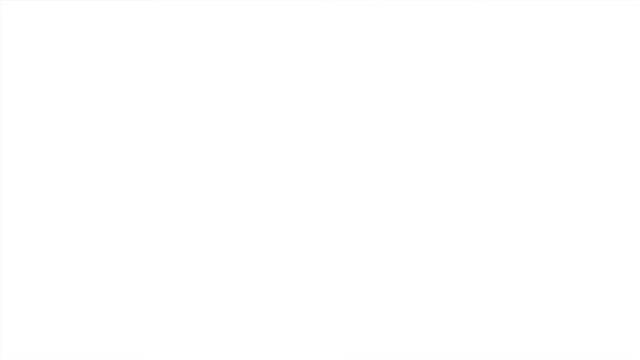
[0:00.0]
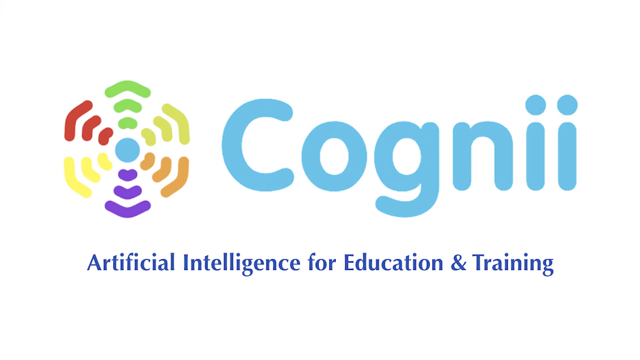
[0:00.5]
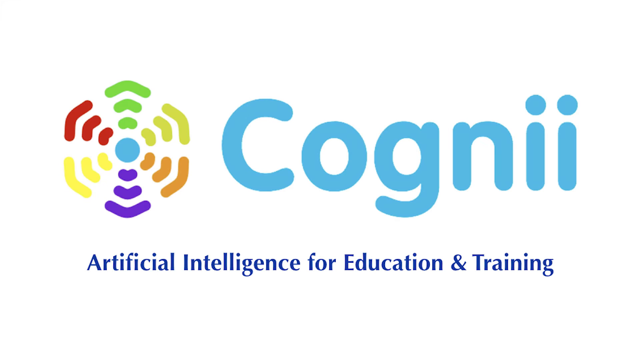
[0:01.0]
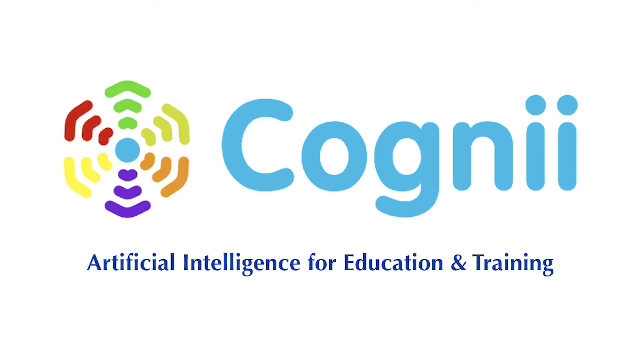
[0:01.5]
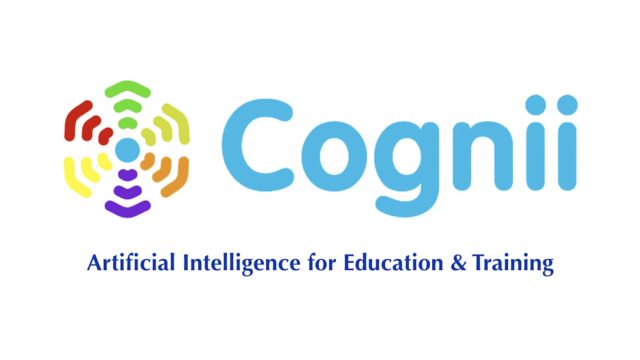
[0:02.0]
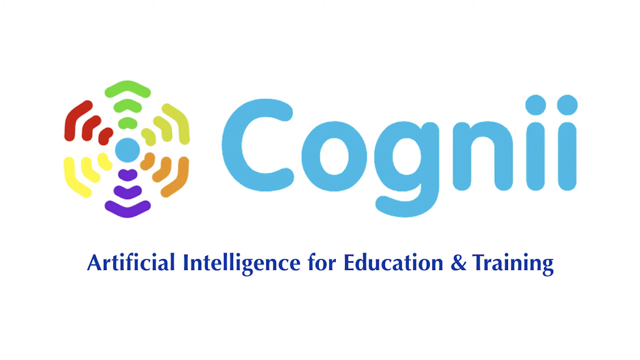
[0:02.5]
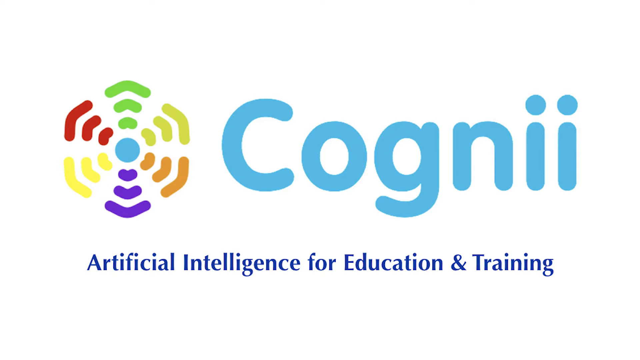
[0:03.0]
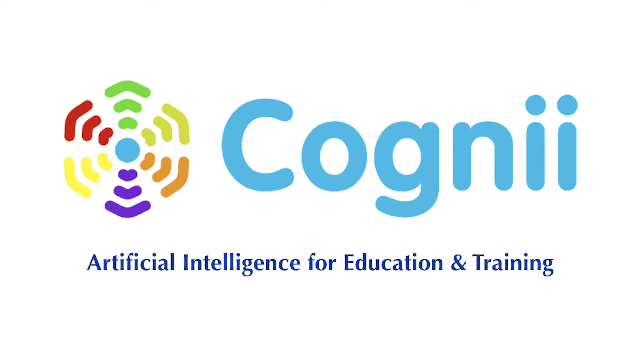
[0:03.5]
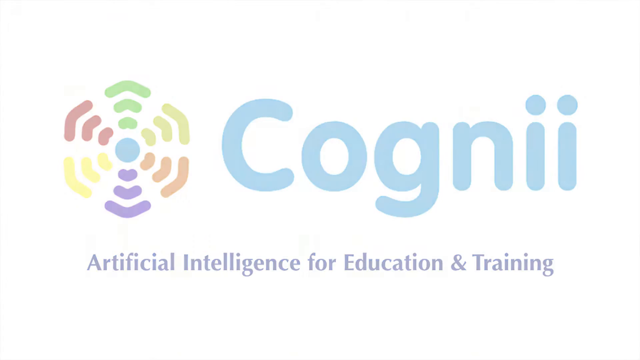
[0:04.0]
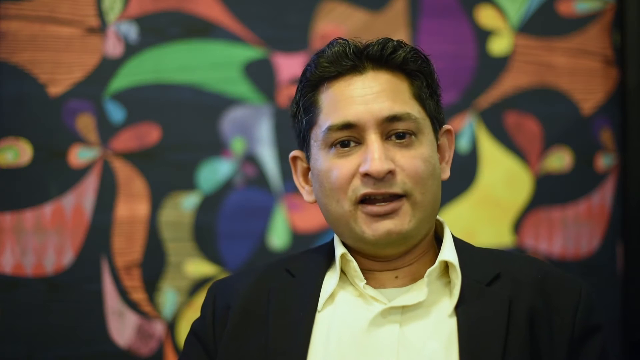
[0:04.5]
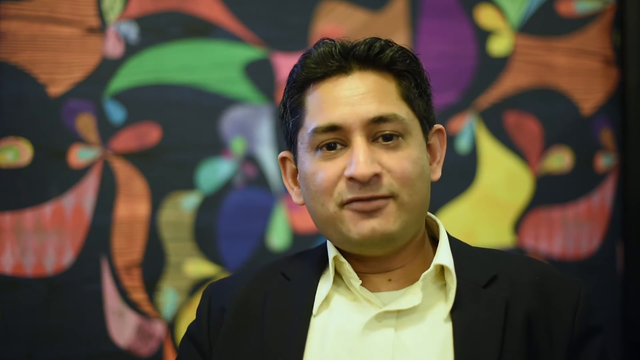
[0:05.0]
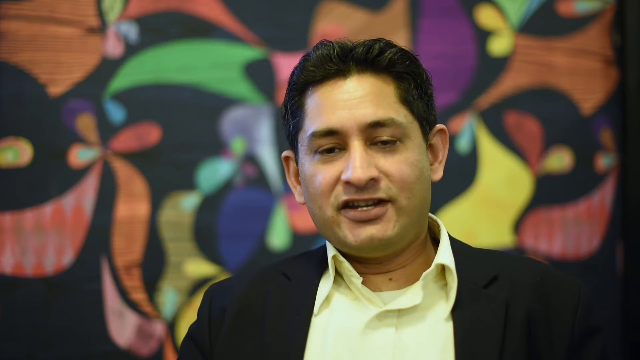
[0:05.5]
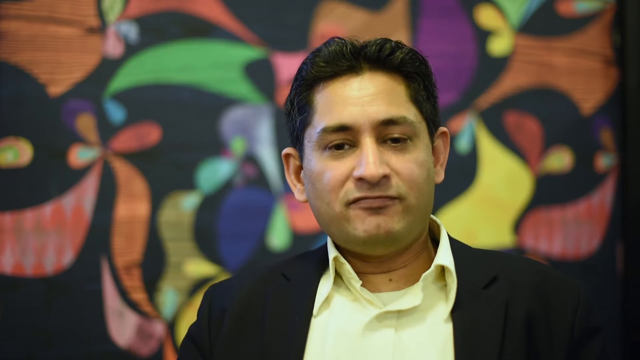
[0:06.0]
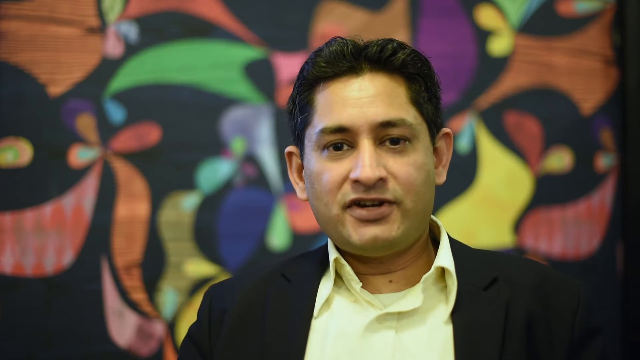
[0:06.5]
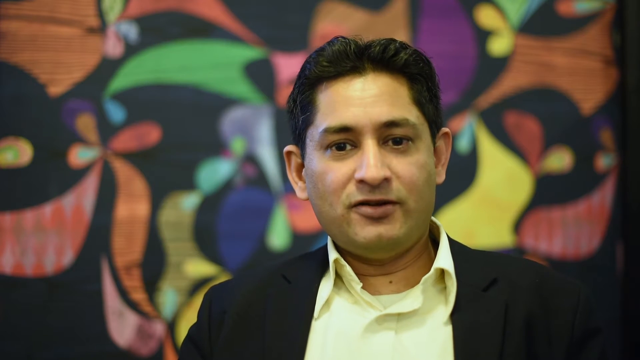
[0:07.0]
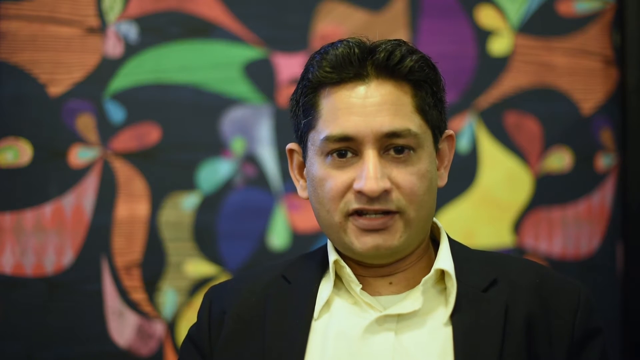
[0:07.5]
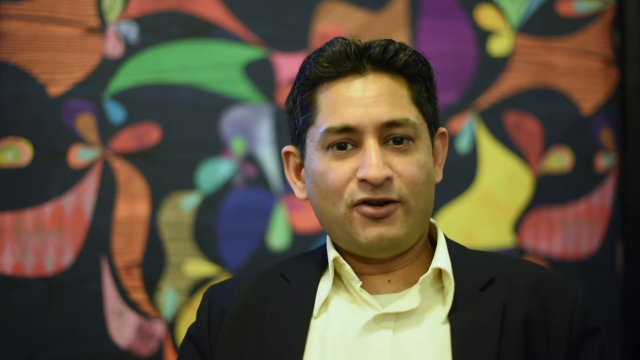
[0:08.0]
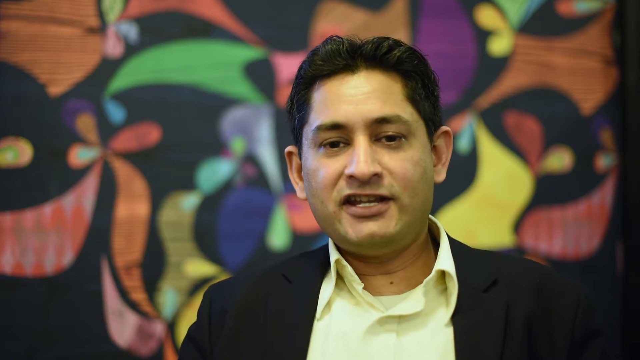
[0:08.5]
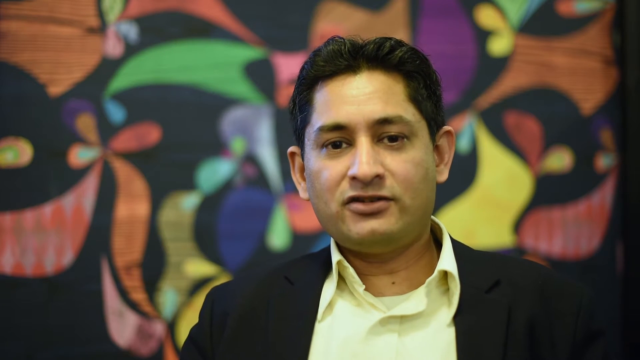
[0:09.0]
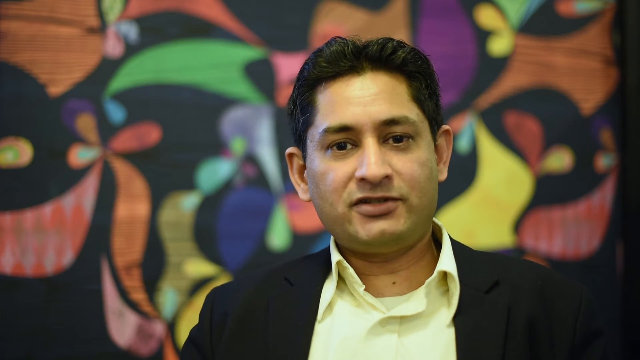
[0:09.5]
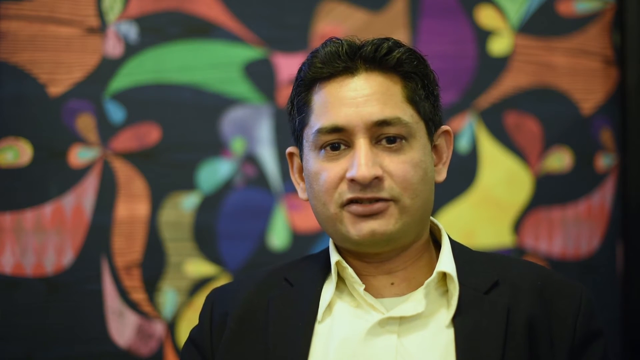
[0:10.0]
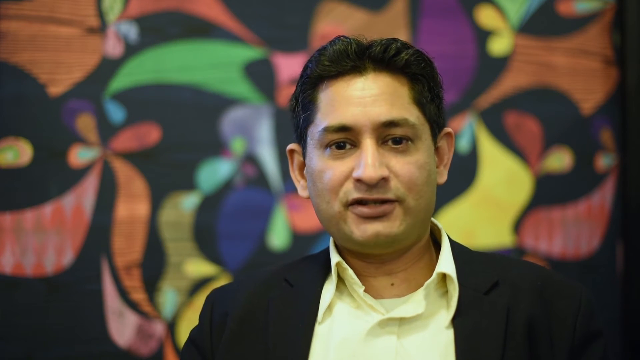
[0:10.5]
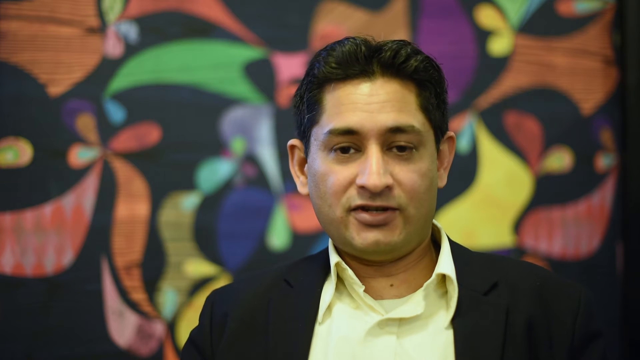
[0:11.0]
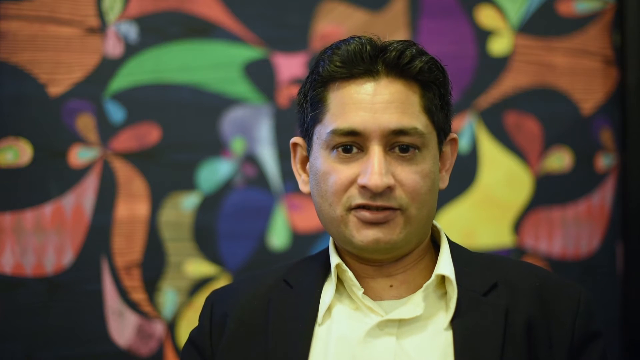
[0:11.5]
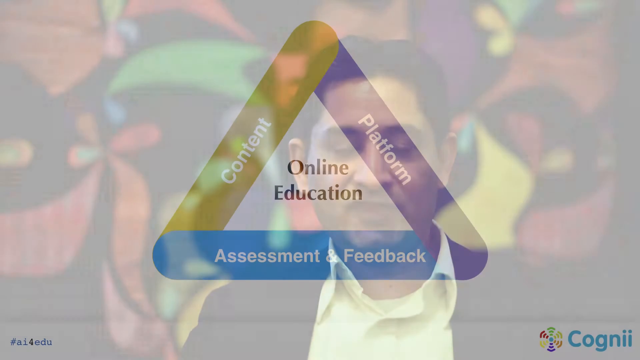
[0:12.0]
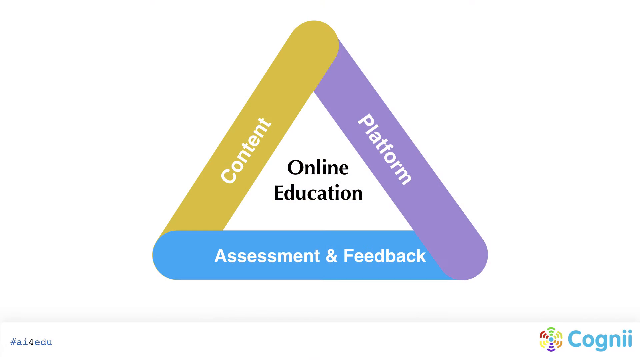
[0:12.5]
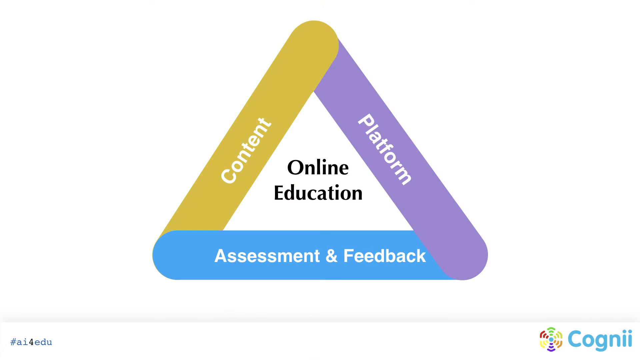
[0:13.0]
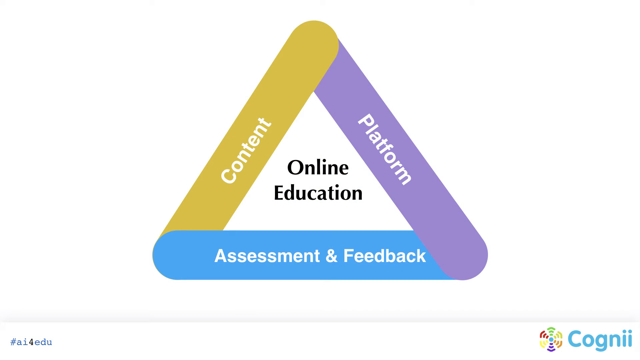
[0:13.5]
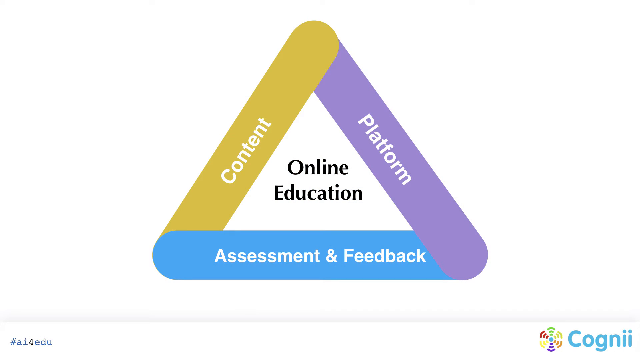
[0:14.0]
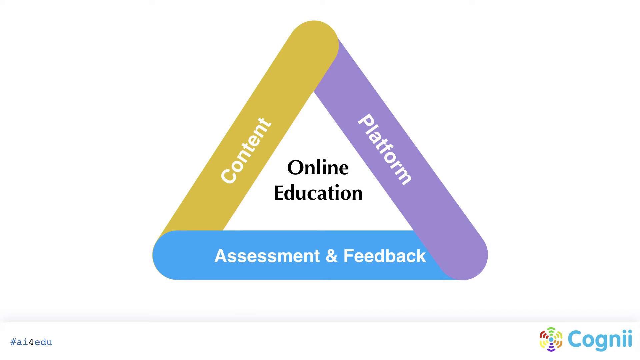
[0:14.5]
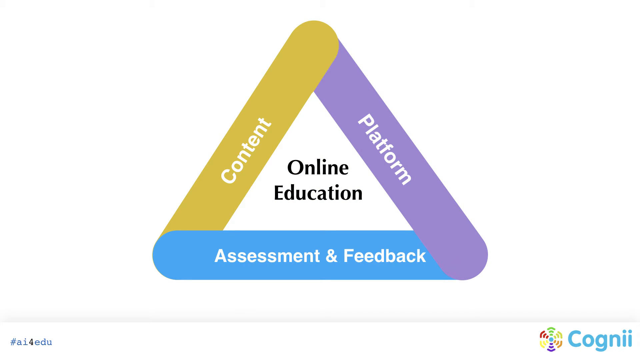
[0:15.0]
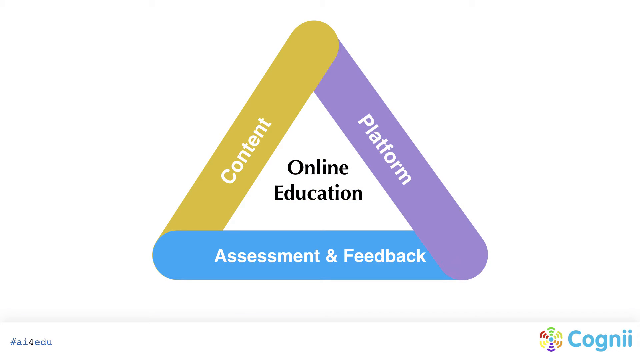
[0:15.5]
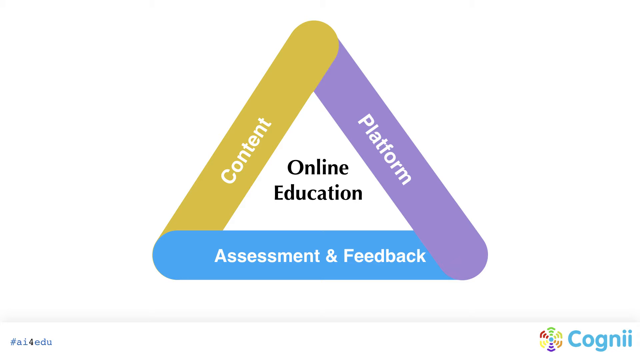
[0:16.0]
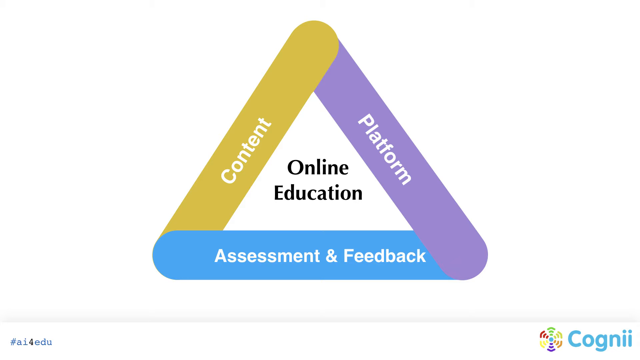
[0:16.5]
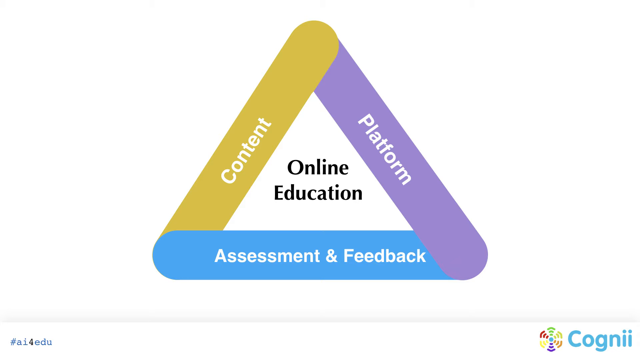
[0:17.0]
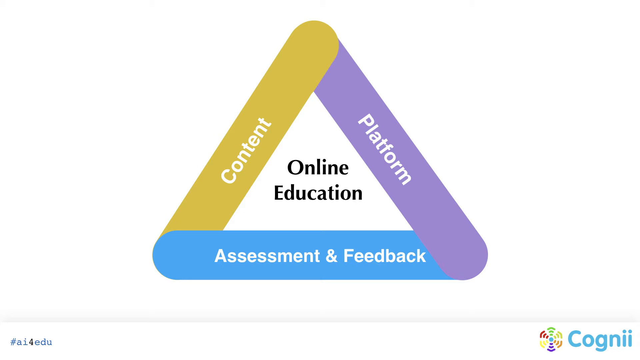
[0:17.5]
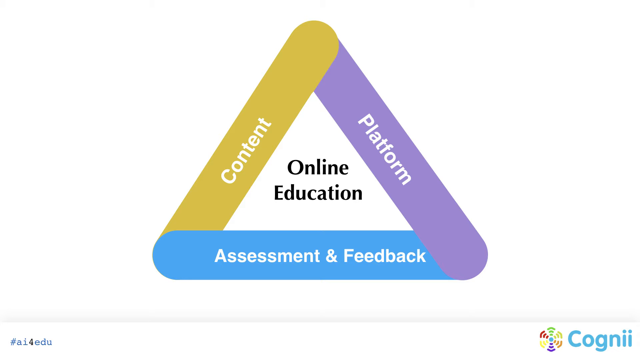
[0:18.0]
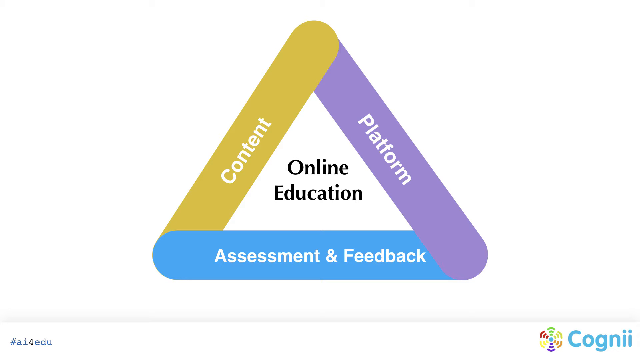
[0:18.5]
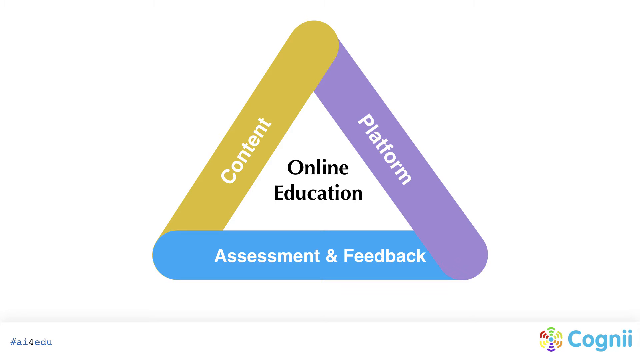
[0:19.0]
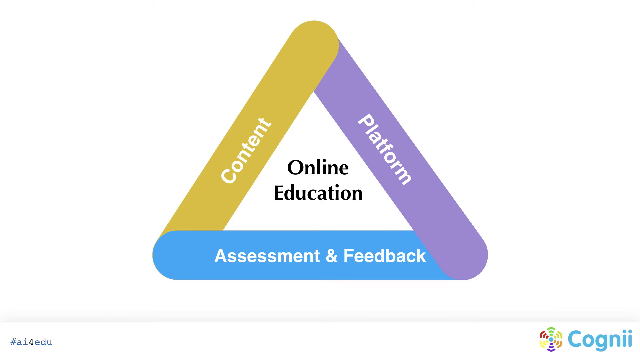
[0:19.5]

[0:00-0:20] A man appears, describing a content platform for online education, assessment and feedback from Cogni, an organization working with artificial intelligence for education and training.